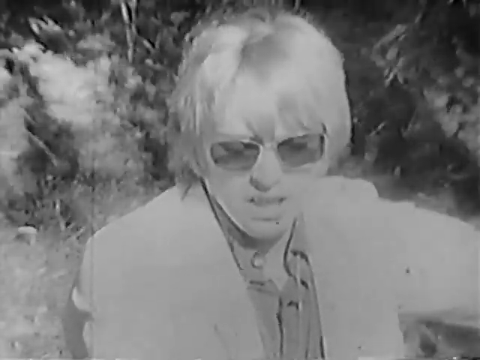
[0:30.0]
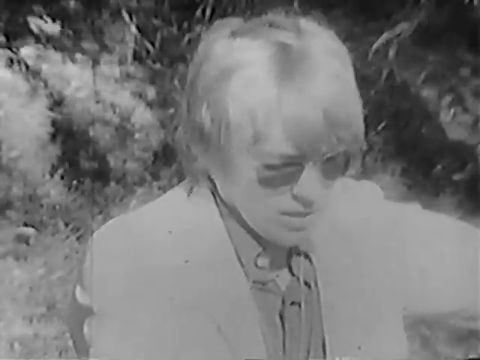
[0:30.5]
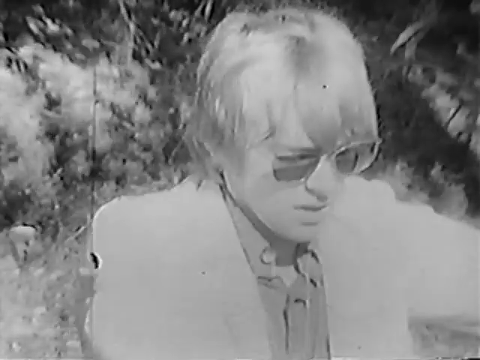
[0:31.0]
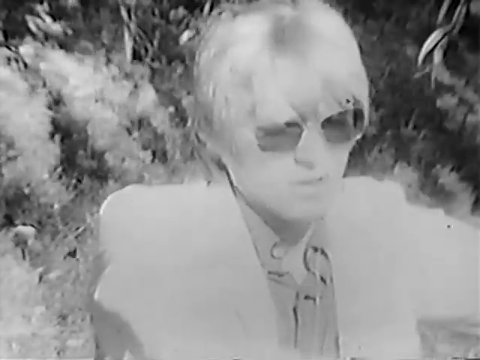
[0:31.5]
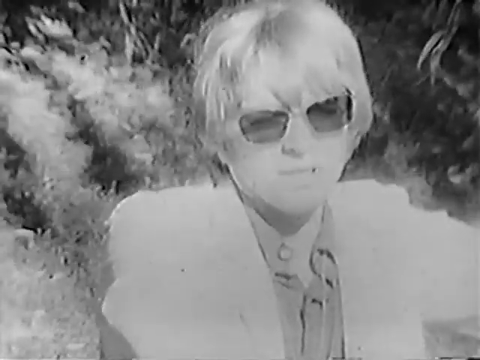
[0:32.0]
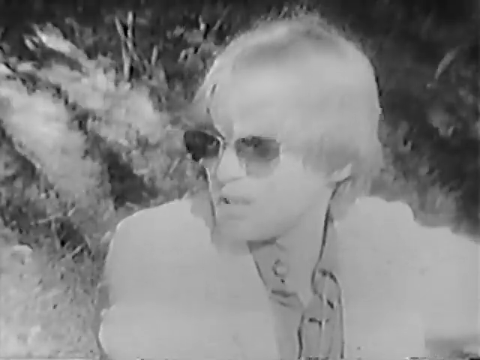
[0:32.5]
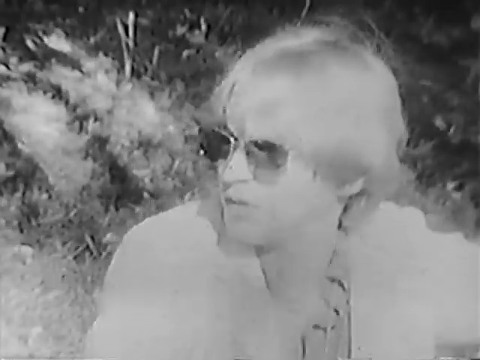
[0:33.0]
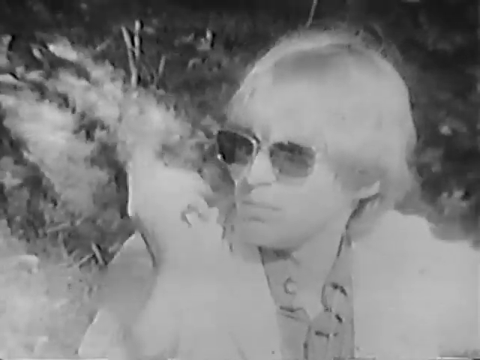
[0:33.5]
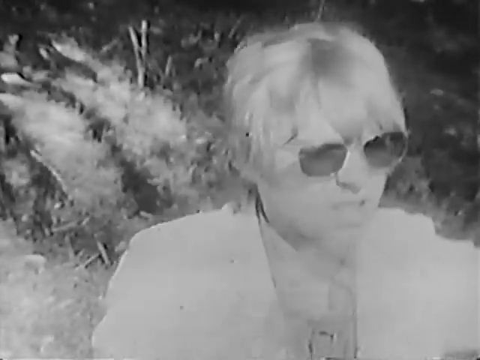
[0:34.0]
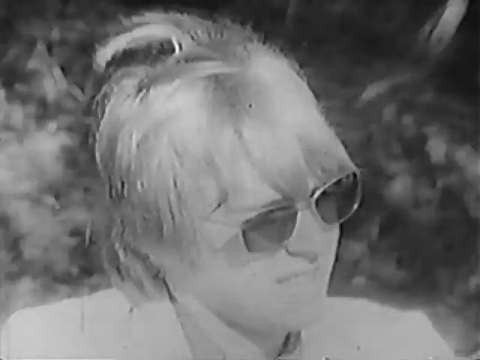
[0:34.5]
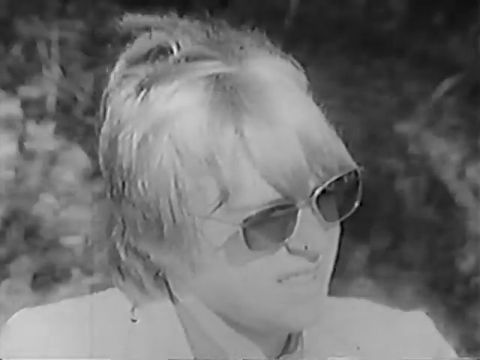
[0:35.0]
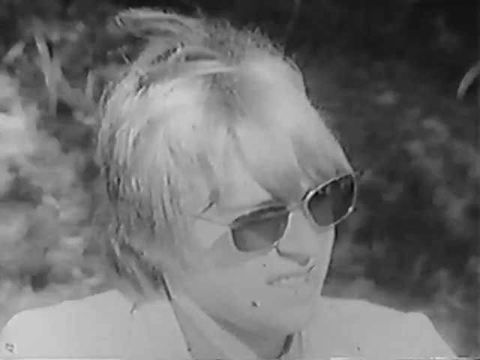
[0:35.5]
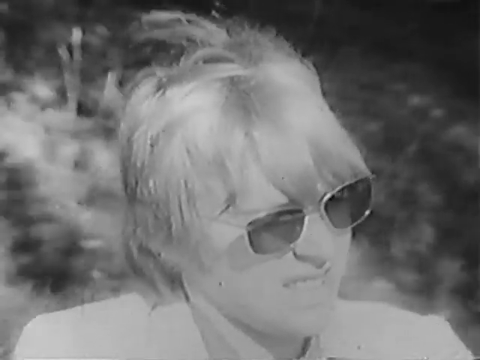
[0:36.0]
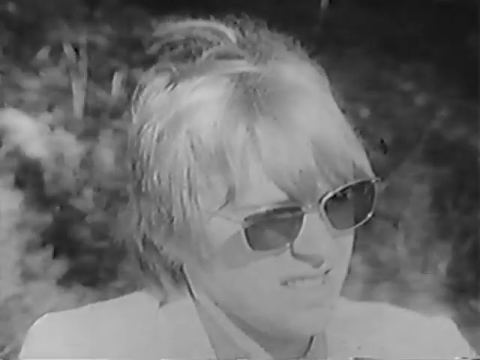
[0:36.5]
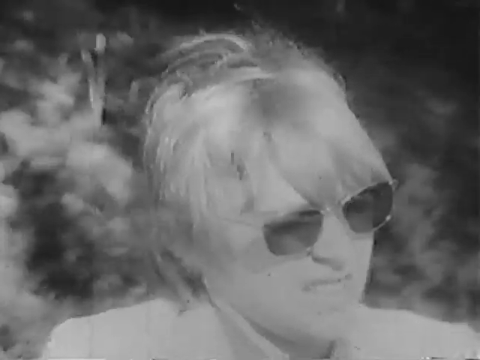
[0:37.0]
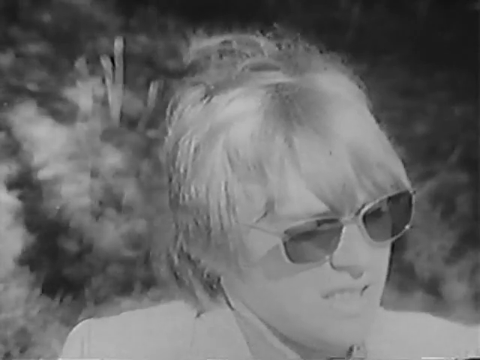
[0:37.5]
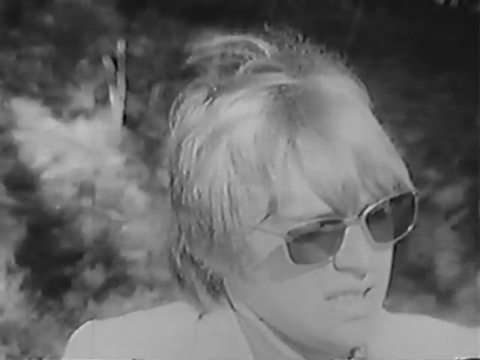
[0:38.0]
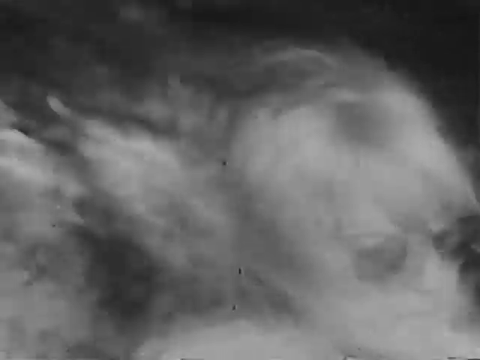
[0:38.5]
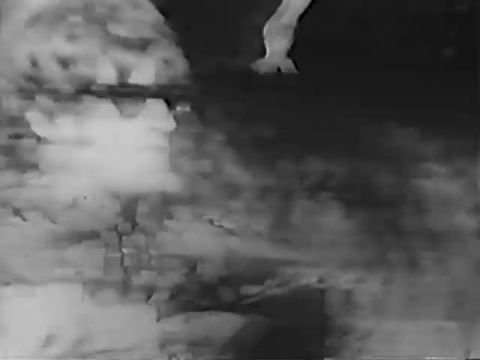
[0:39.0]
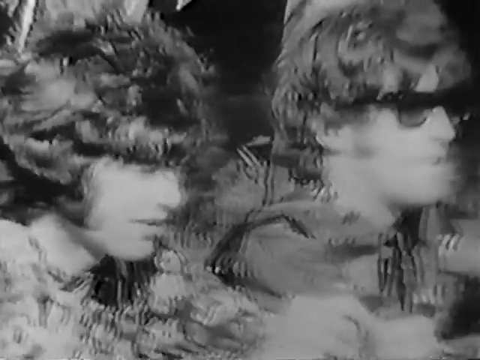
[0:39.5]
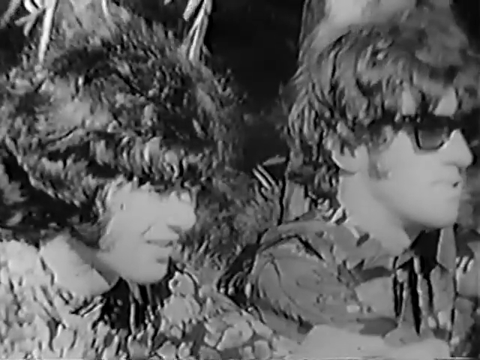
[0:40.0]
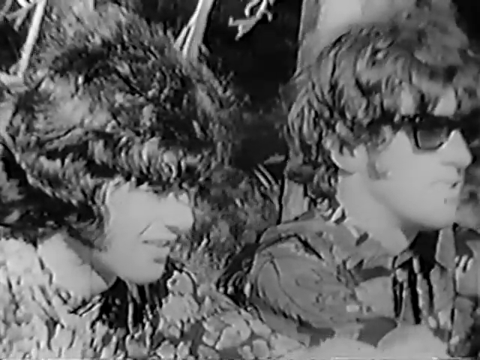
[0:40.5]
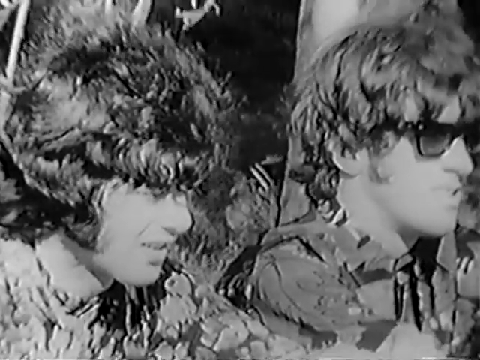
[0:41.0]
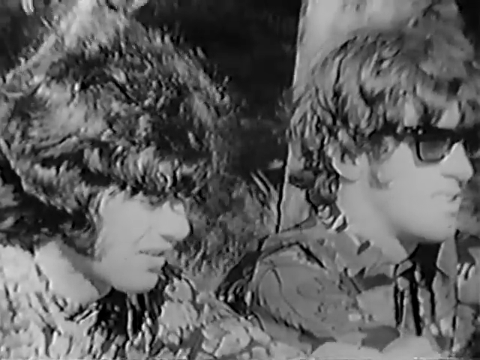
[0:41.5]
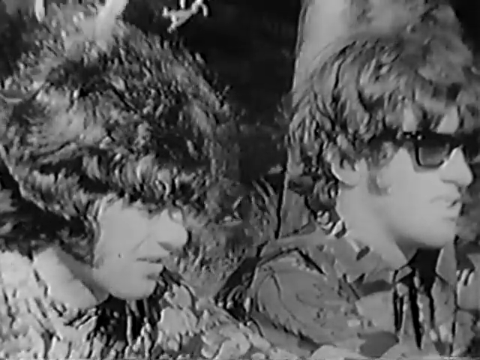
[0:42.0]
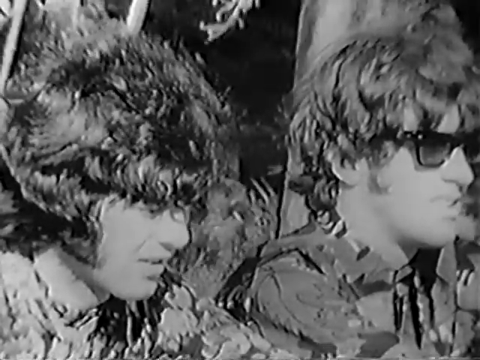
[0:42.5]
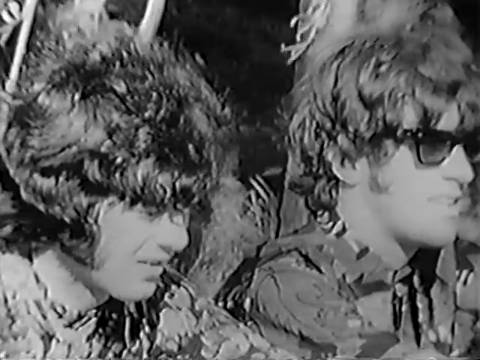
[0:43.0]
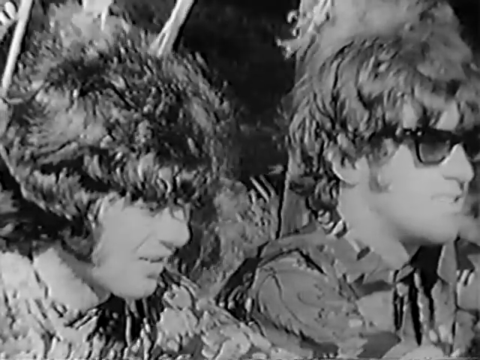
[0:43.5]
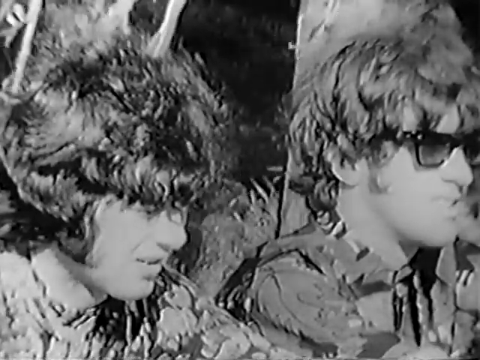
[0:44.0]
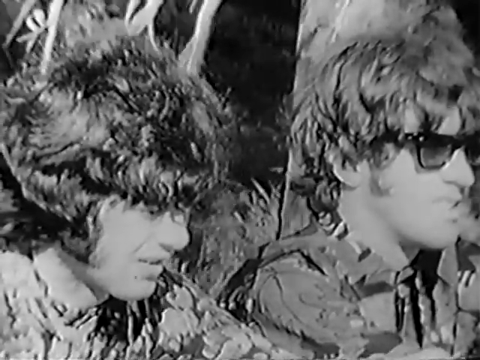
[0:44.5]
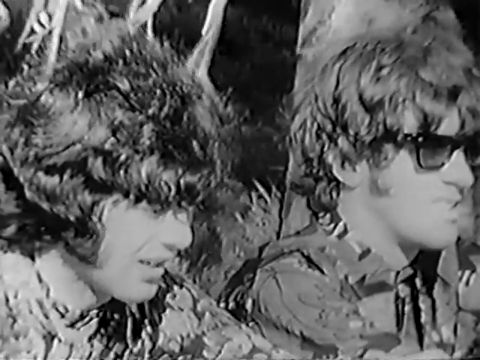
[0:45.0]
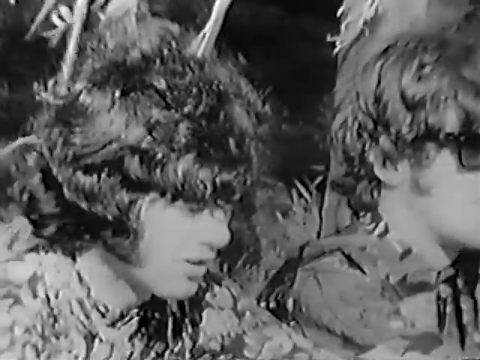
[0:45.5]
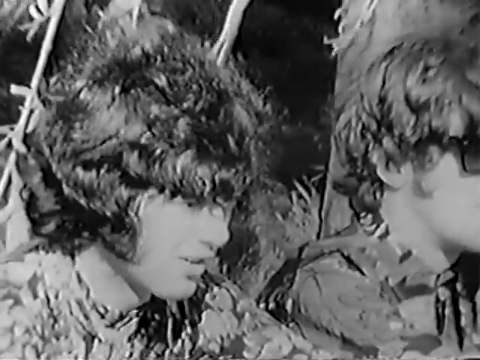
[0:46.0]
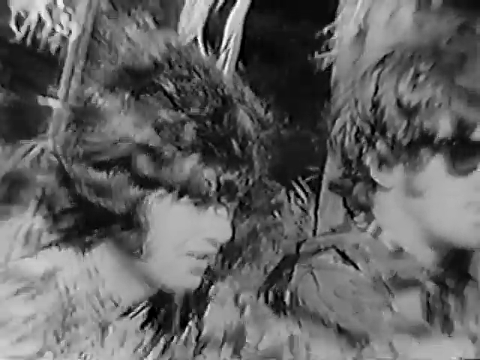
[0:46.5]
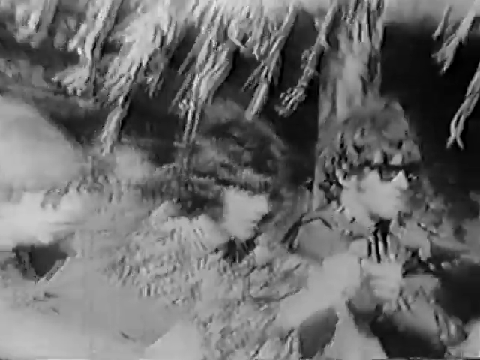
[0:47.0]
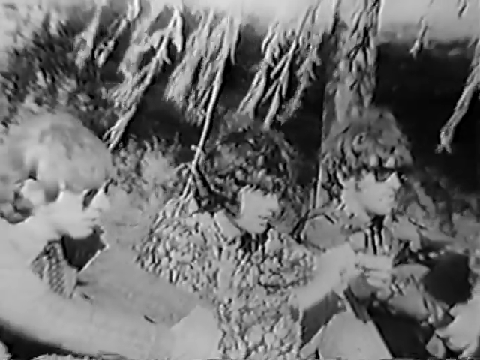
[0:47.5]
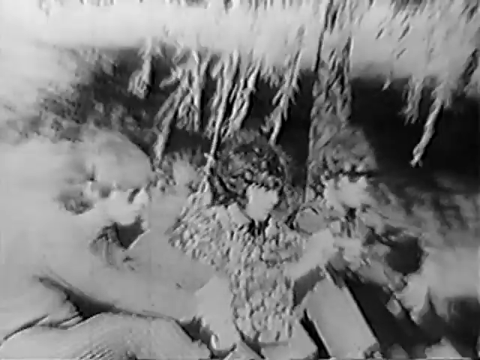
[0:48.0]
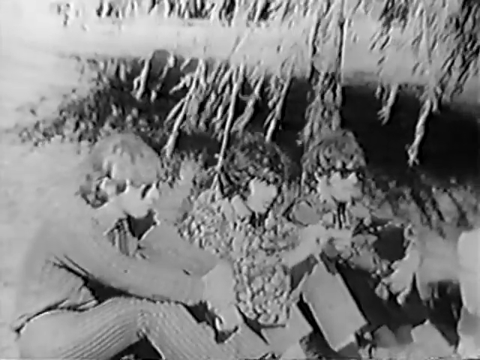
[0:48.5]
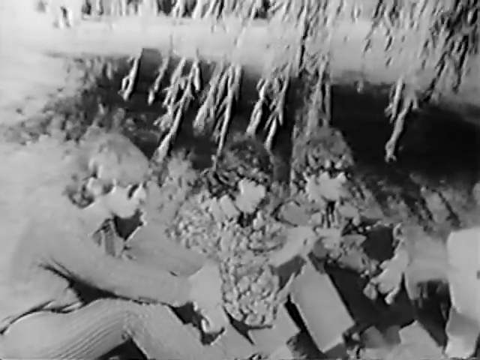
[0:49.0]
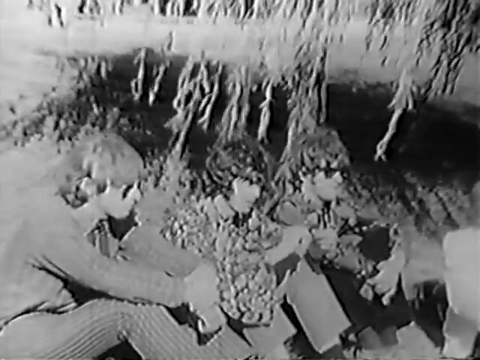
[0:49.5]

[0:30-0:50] The camera continues on the blonde-haired man, who wears wire-rimmed sunglasses and gestures a little toward the people behind him or off to his side. The camera pans in on the three sitting together, gets close on the two on the right, then pans out again to show all three, who are all talking. The one in the middle is the only one not wearing sunglasses. The man being interviewed in the initial close-up has a white jacket over a slightly darker button-up shirt that is open at the collar, unbuttoned, and a blonde, shaggy bob haircut. There are wildflowers, and it is windy and breezy; in the back, what looks like grasses are blowing. The shot switches to the two shaggy, dark-haired individuals, who are talking, or the one with the glasses is talking; then the one in the middle starts talking. The camera pans out to show the third man, with a tree in the background. They are on a grassy hillside in a light breeze. They look like they may be a musical group being interviewed, with a very typical hippie look of that era.